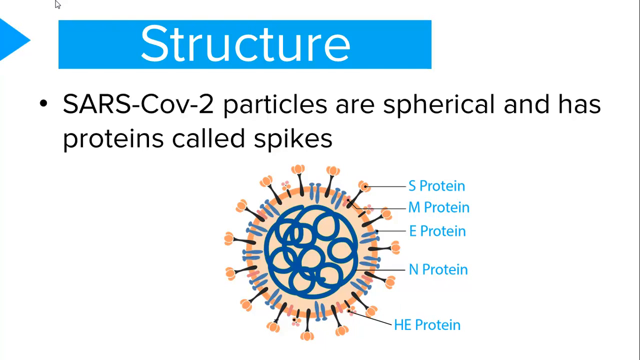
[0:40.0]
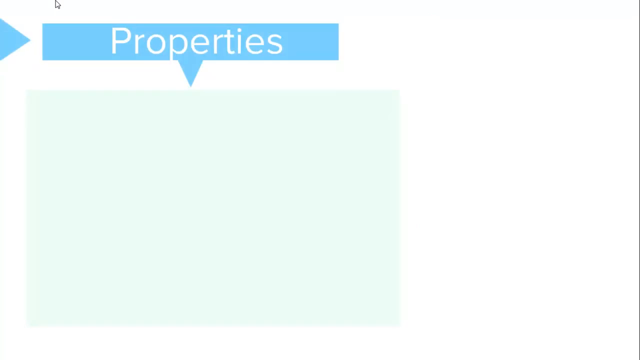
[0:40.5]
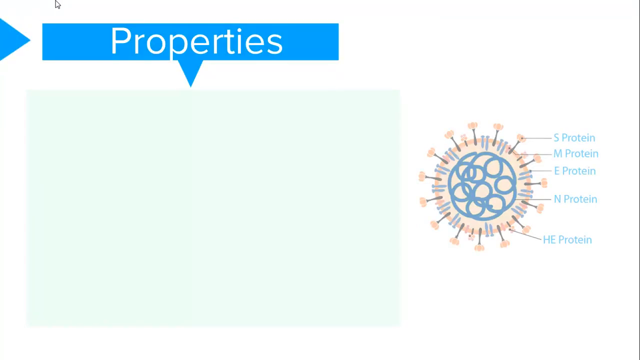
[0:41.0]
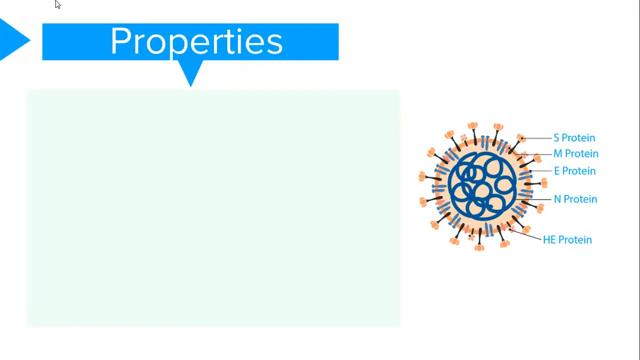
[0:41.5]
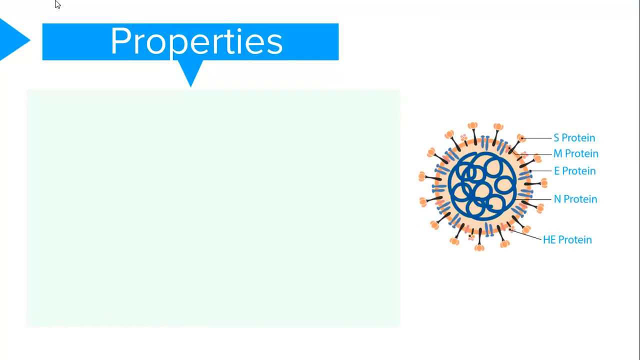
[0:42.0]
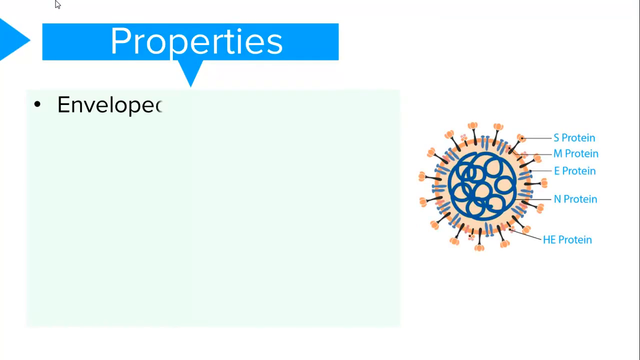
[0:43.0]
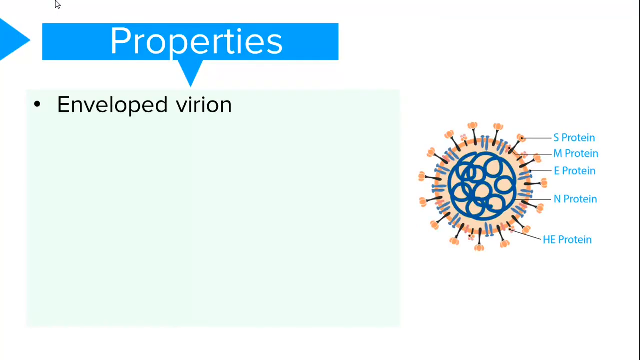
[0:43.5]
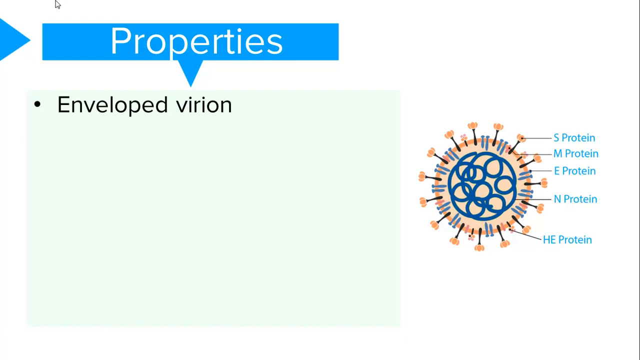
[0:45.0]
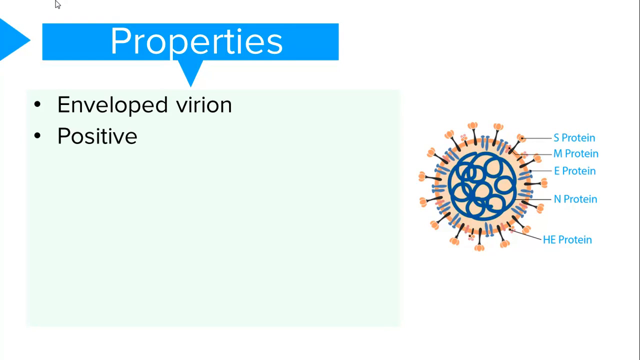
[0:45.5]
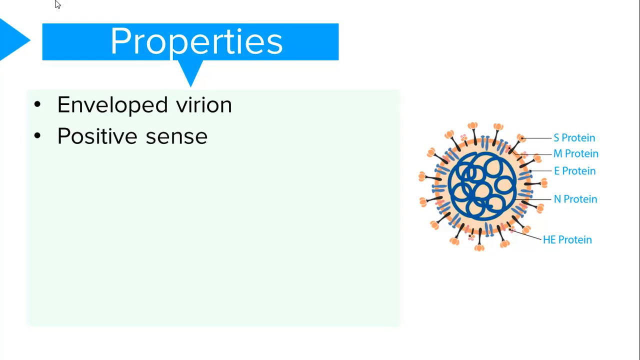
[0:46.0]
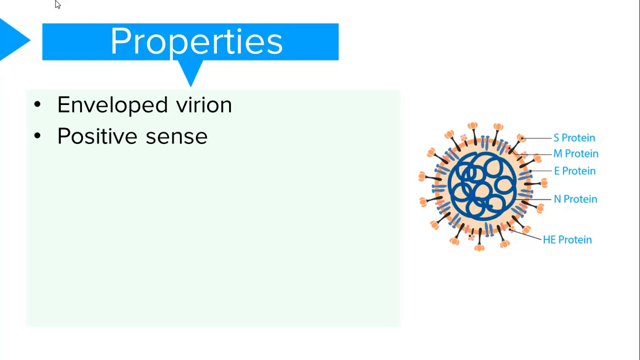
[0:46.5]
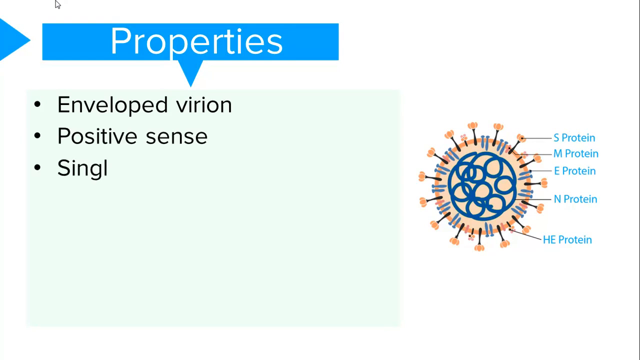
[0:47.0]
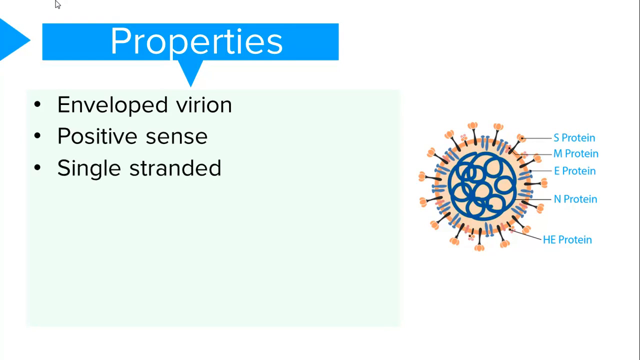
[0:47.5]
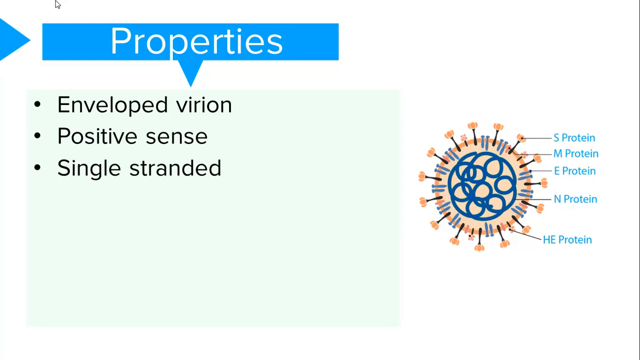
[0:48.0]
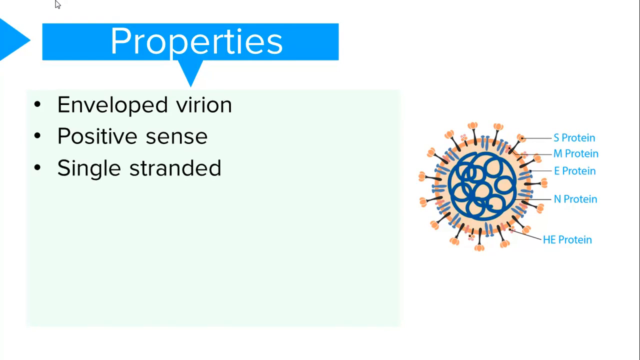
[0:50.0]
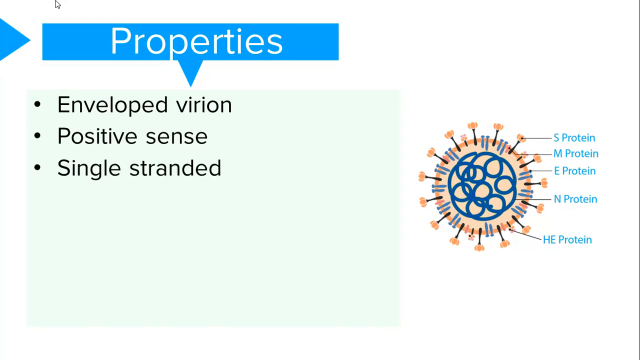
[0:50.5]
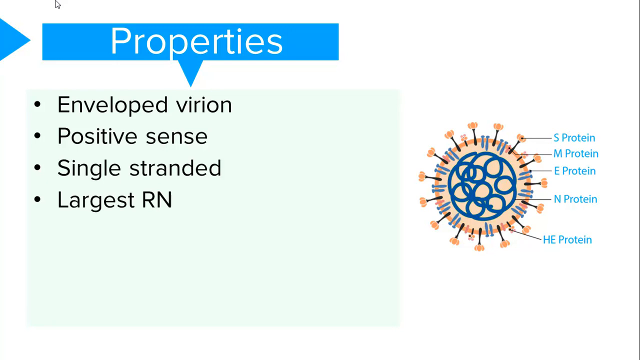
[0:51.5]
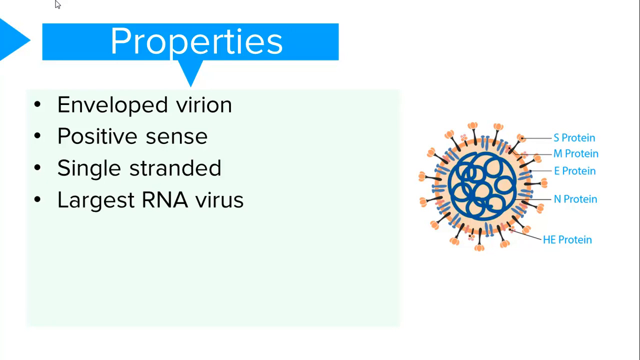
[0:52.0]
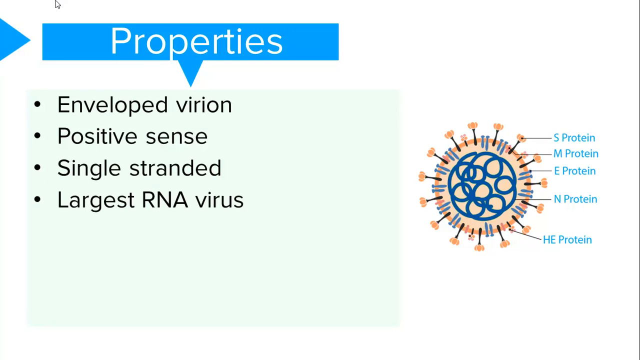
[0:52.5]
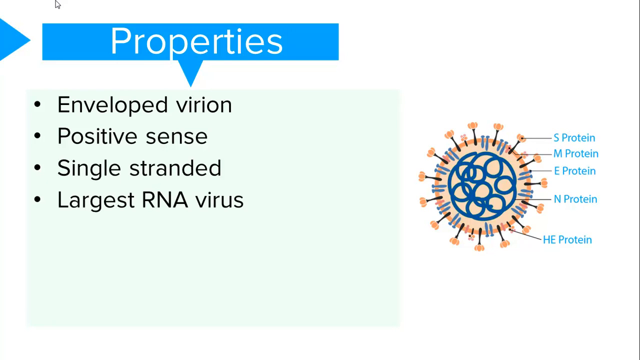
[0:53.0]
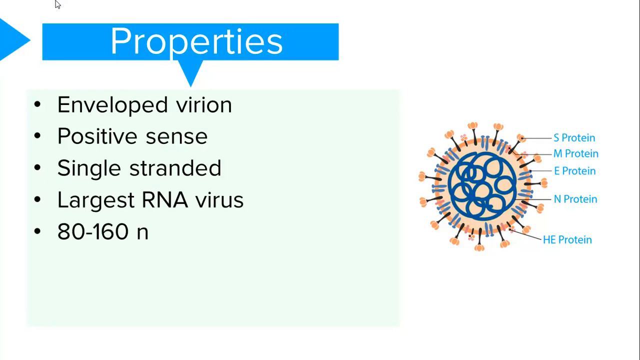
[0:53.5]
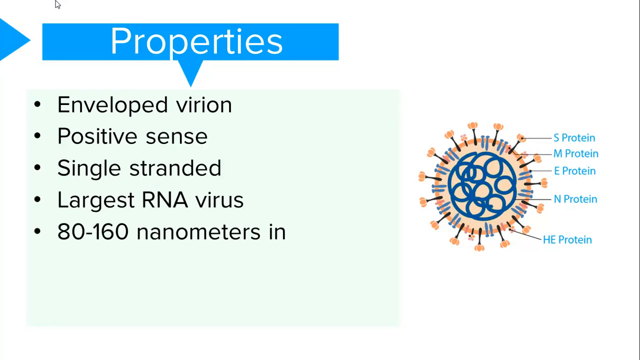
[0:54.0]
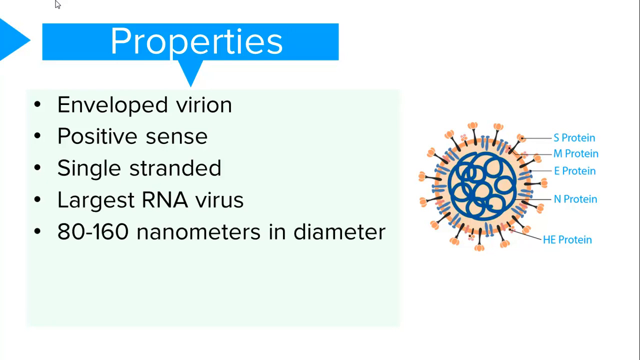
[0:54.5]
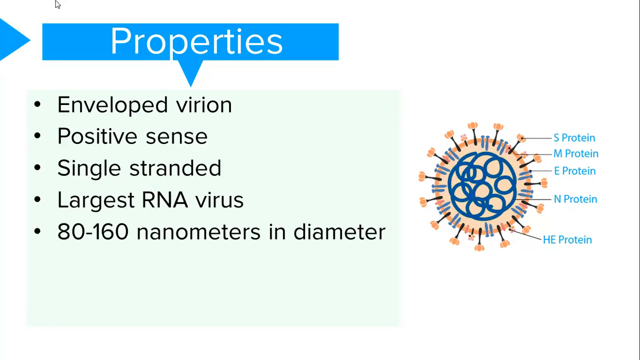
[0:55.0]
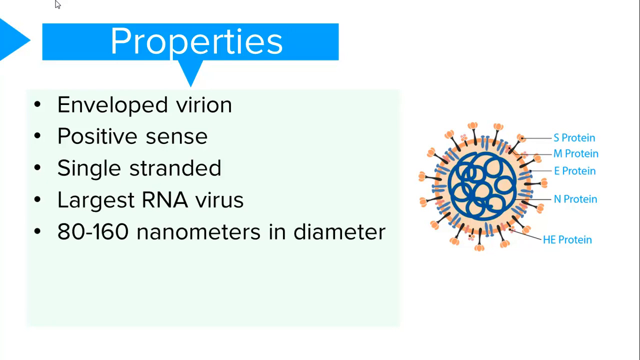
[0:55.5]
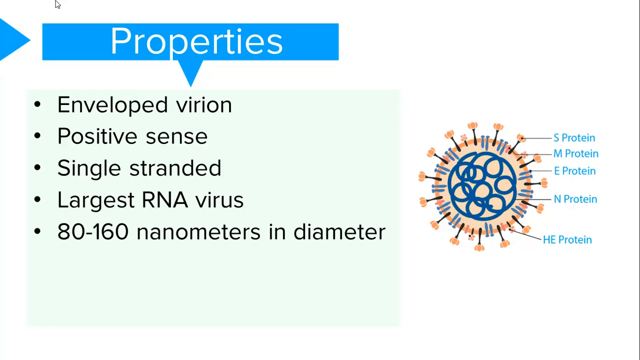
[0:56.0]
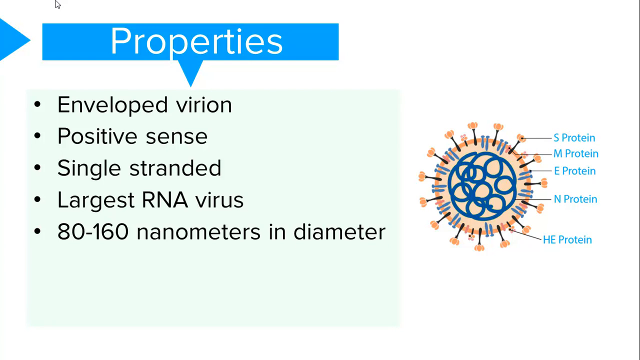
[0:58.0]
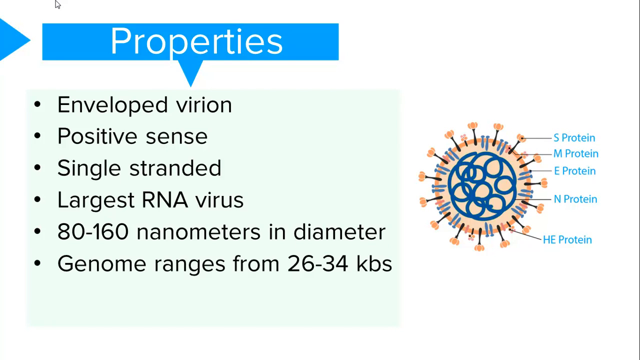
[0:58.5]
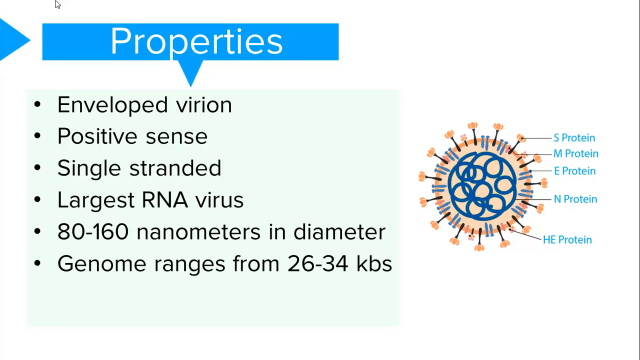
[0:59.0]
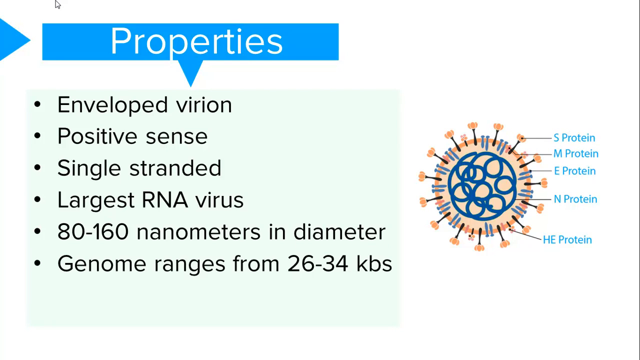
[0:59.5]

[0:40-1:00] The next page is titled "Properties" on a blue banner, with the blue triangle next to it as well as underneath it. The COVID-19 virus is shown on the right side with its lettered proteins labeled. A mint green rectangle holds black text in a bulleted list reading "enveloped virion", "positive sense, single-stranded", "largest RNA virus", "80 to 116 nanometers in diameter" and "genome ranges from 26 to 34 kbs". When the slide changes, the animations appear one after the other: the banner first, then the picture of the COVID-19 virus, and then the text on top of the mint green background.